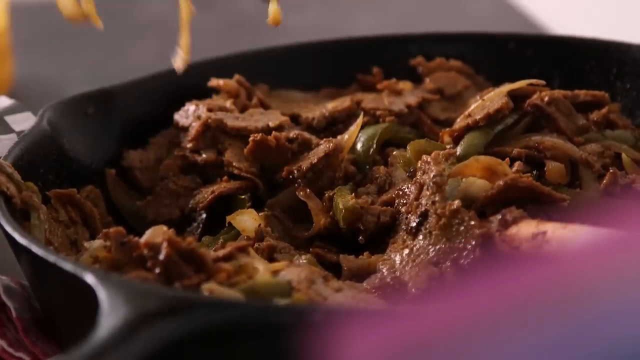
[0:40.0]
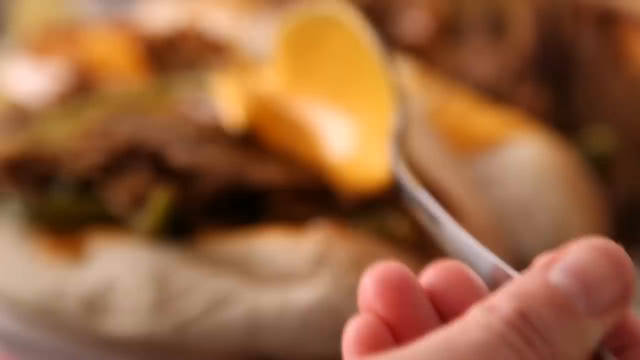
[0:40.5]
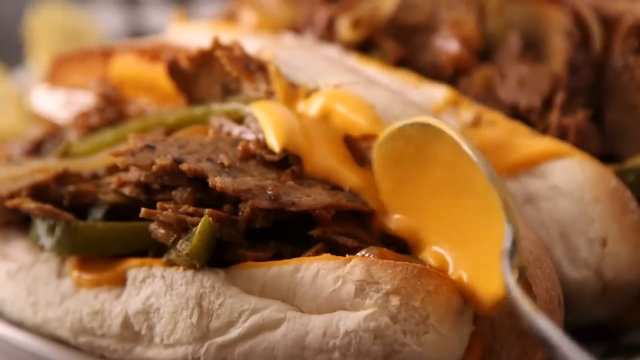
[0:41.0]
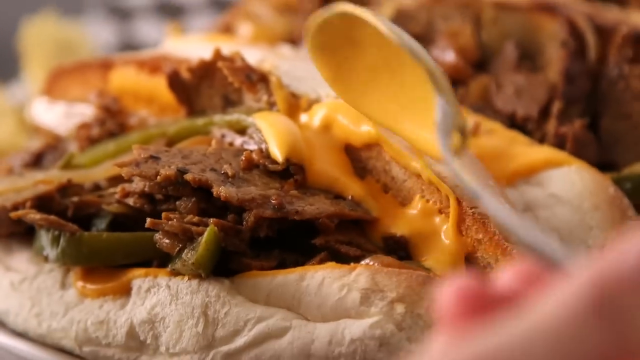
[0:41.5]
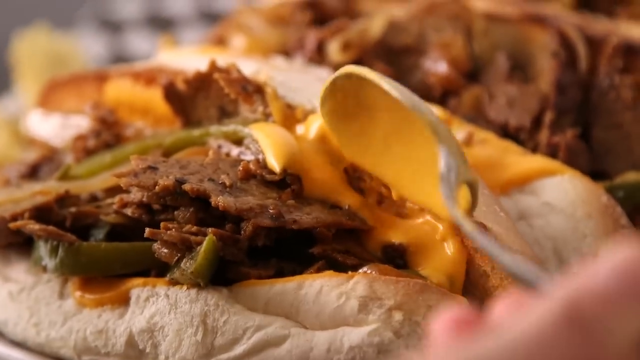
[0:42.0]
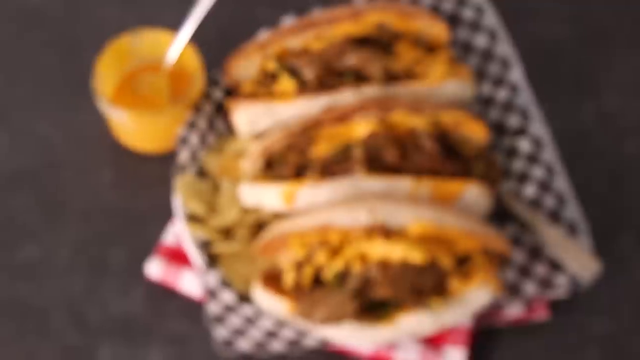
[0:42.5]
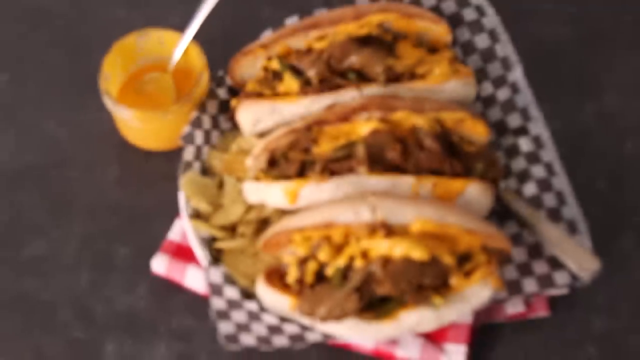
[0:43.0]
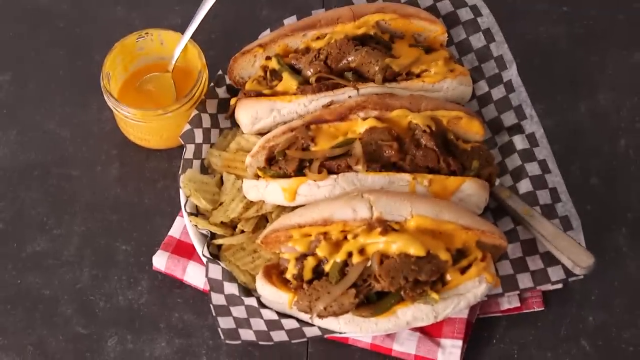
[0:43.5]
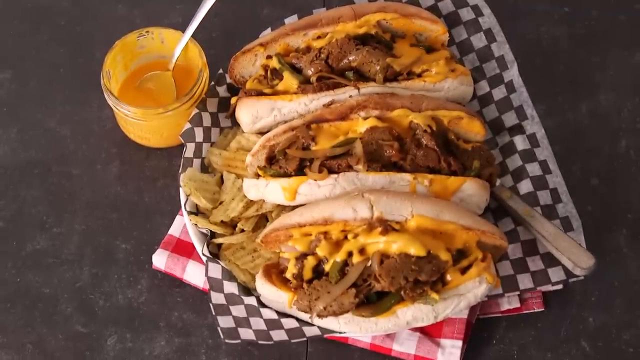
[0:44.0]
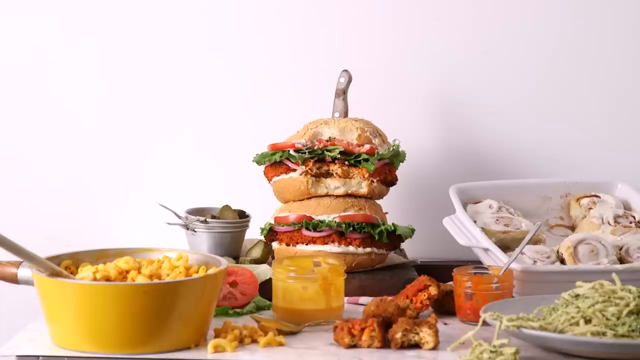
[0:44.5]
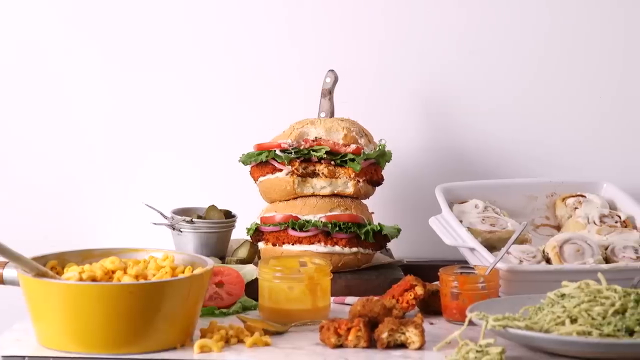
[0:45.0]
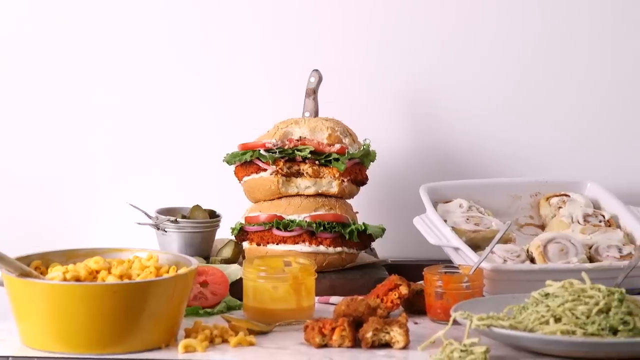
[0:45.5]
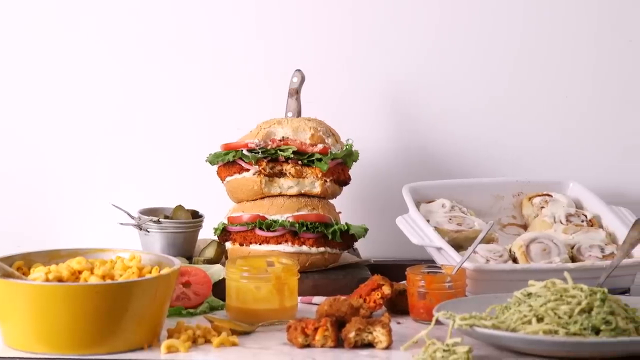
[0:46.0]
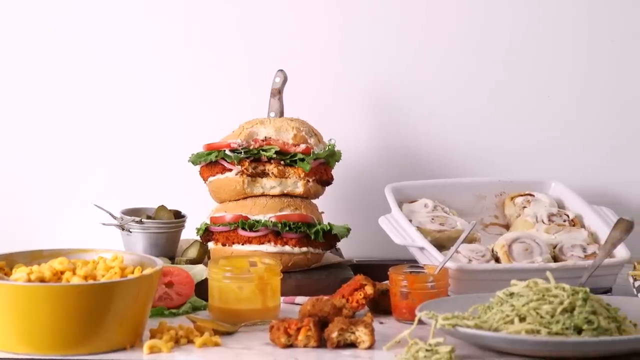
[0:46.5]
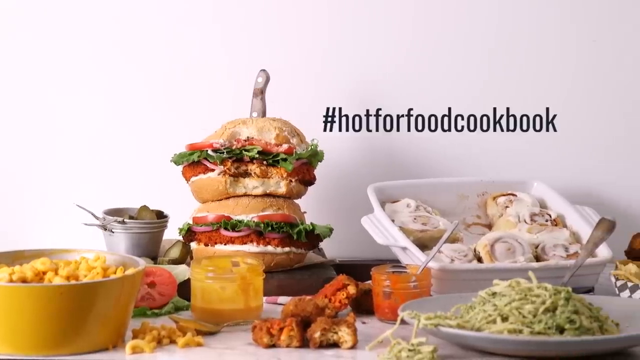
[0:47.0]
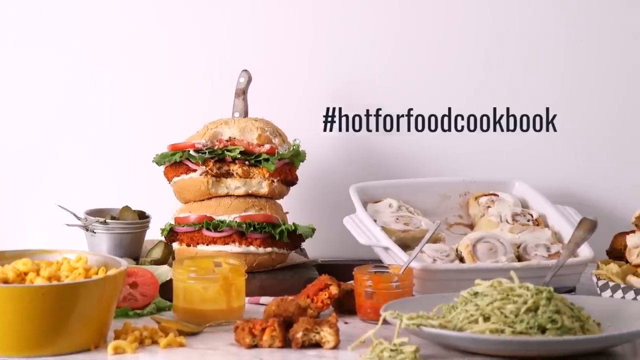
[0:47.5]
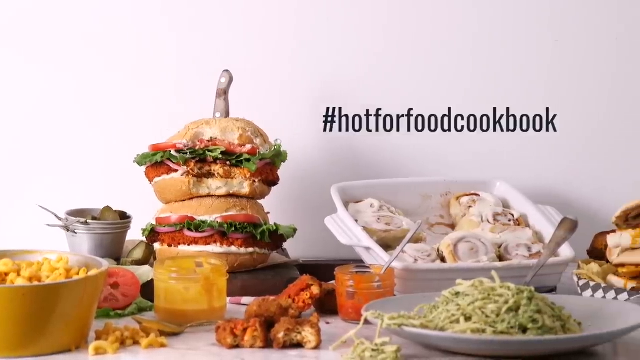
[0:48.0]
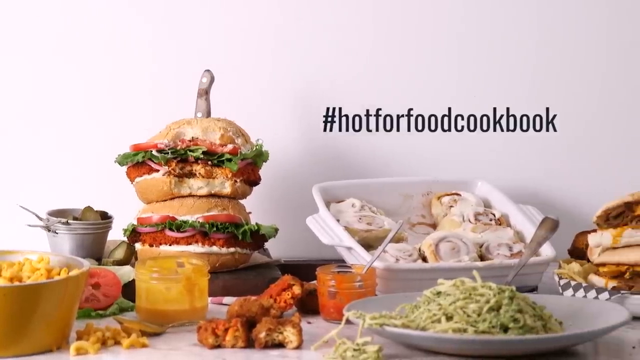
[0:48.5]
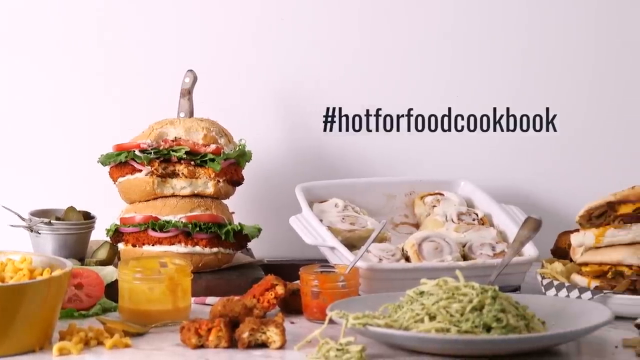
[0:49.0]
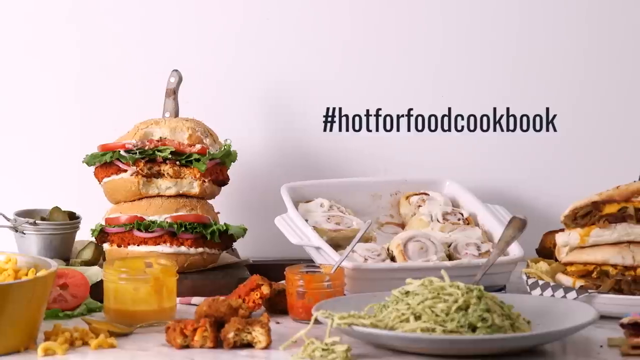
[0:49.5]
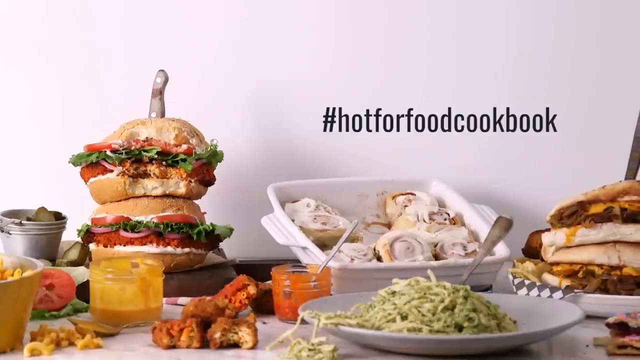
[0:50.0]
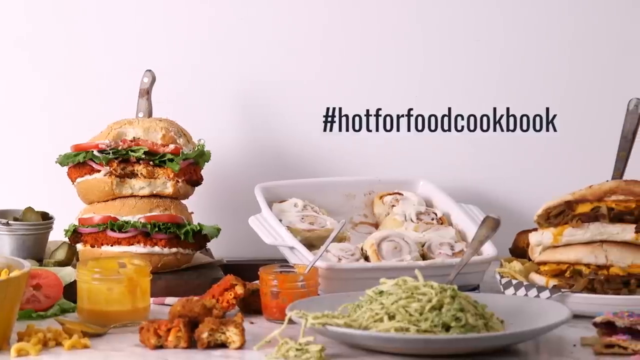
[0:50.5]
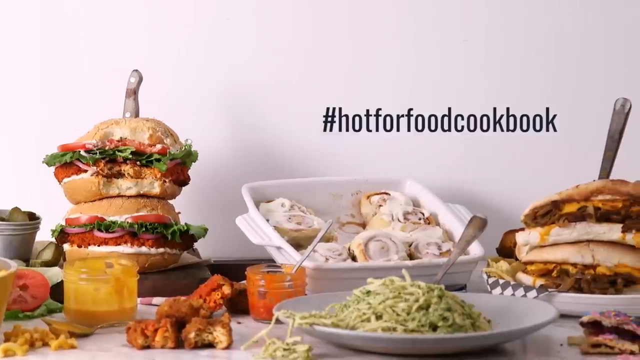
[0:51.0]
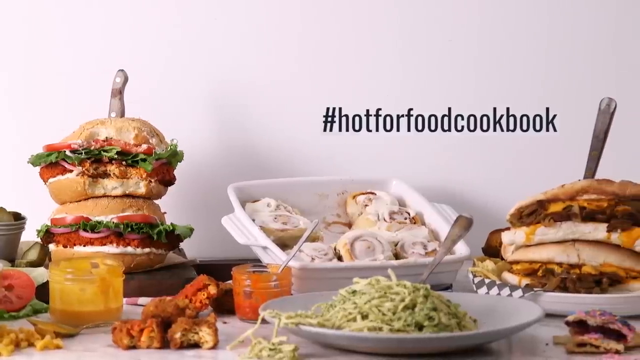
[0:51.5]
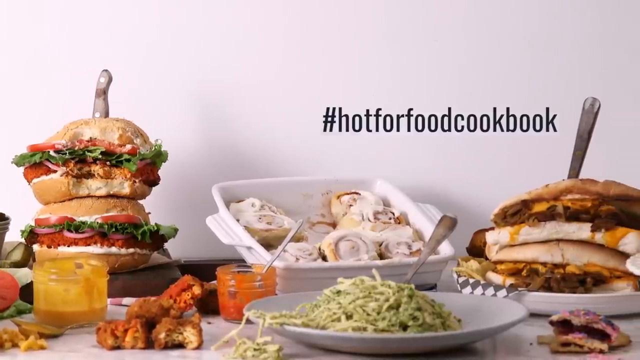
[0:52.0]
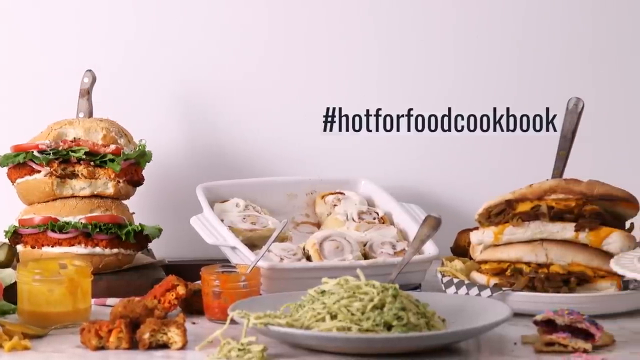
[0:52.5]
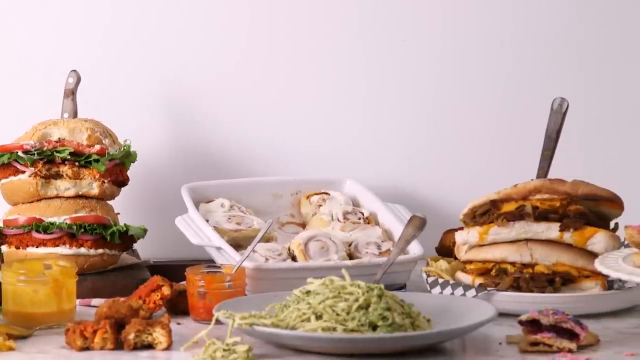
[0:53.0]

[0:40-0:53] She puts the stir fry into some buns. A hot for food cookbook is shown, and she seems to be selling the cookbook. Repetitive shots show her biting something and licking her fingers, the very sloppy sandwich, and sauces being drizzled on things. The very vibrant, colorful pastries she made appear, along with the fried macaroni and cheese bites, the peas, pasta and broccoli topped with basil, possibly with some pesto, the cinnamon rolls with cream cheese, and a huge pot of macaroni and cheese.